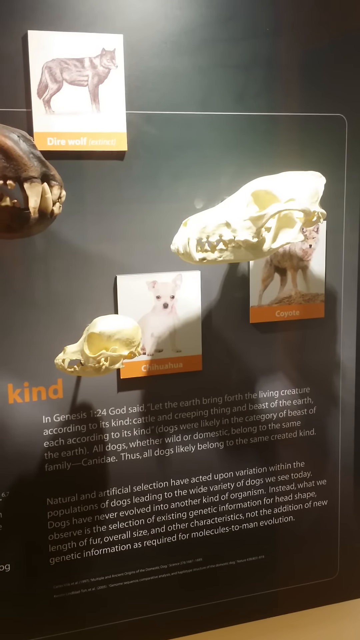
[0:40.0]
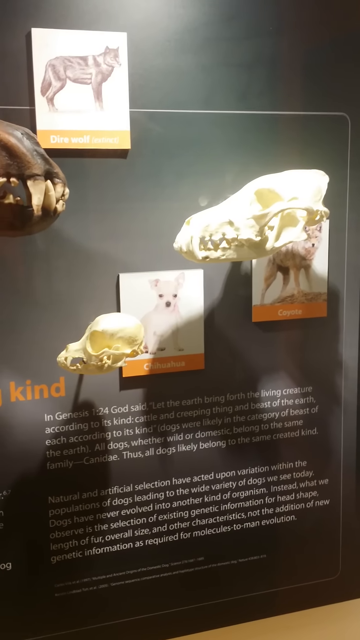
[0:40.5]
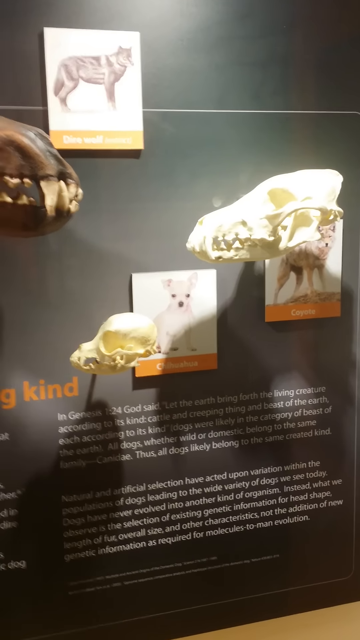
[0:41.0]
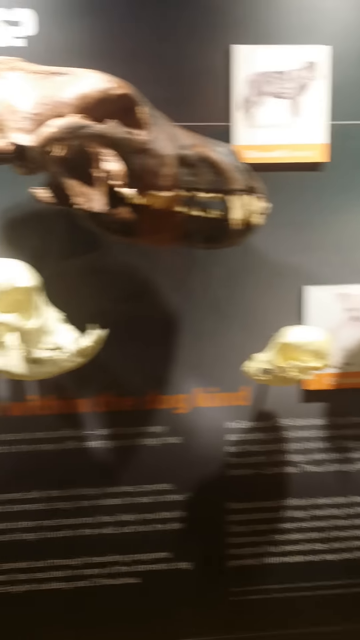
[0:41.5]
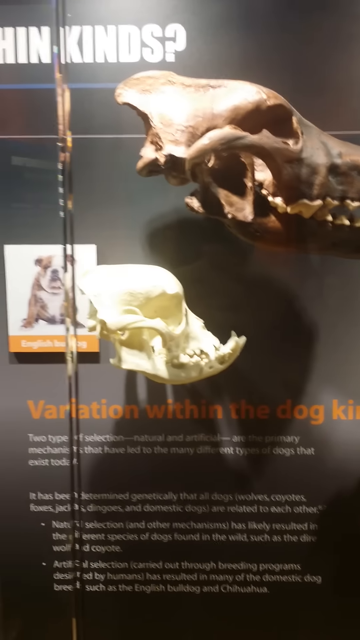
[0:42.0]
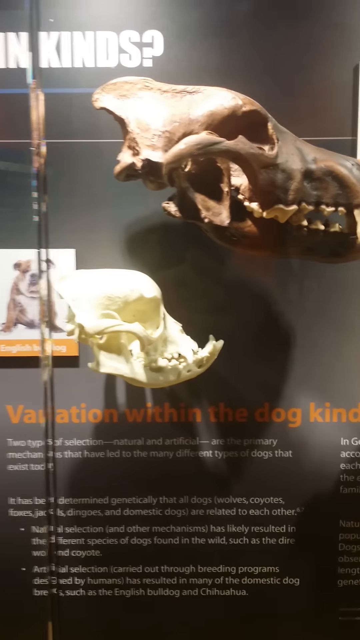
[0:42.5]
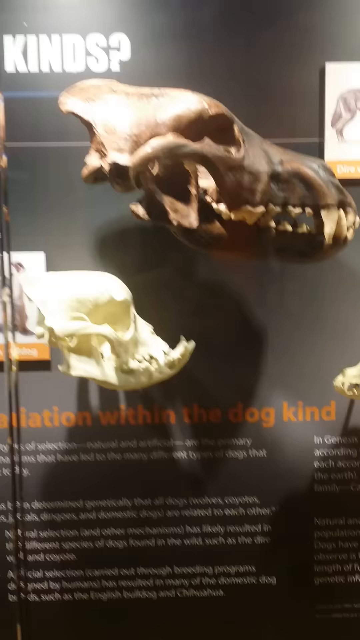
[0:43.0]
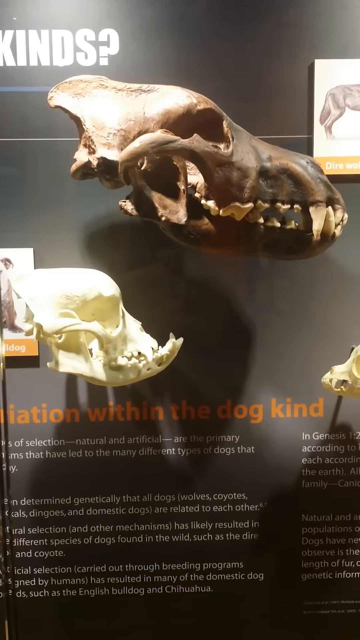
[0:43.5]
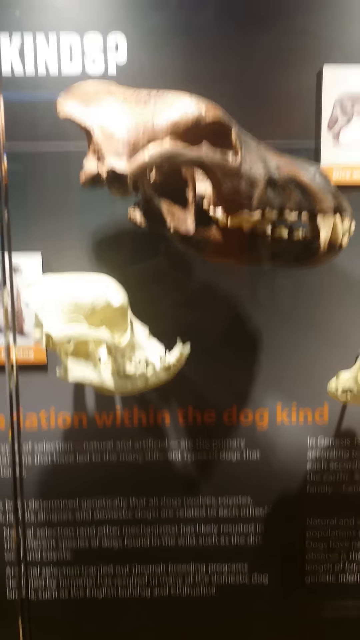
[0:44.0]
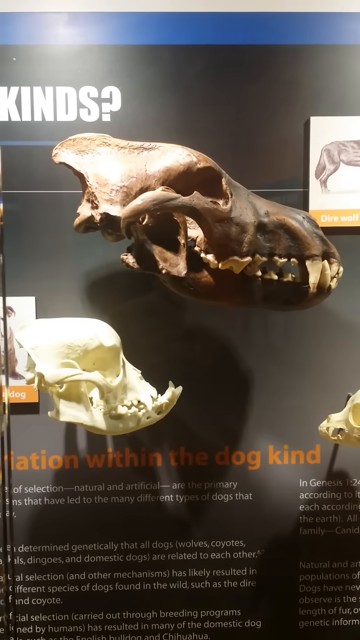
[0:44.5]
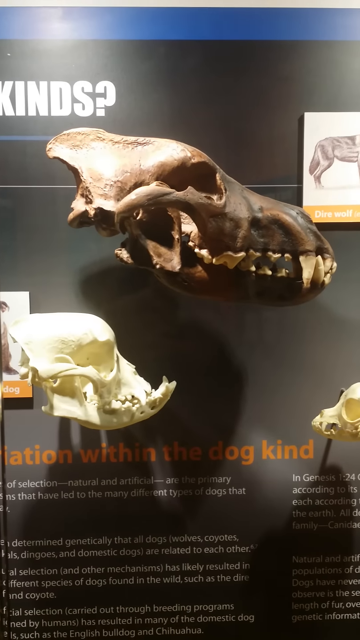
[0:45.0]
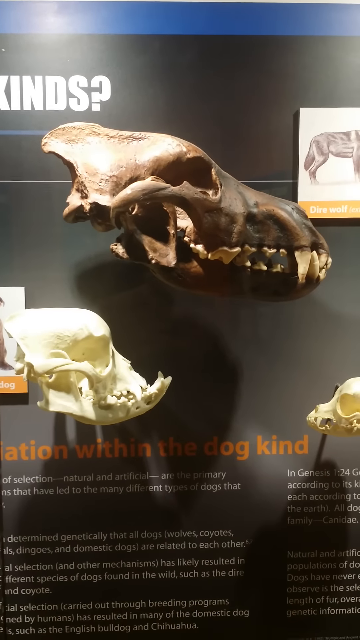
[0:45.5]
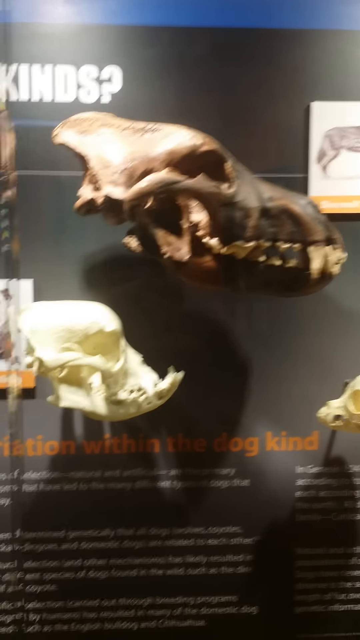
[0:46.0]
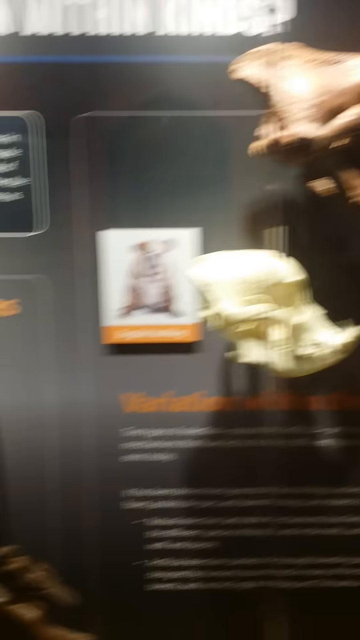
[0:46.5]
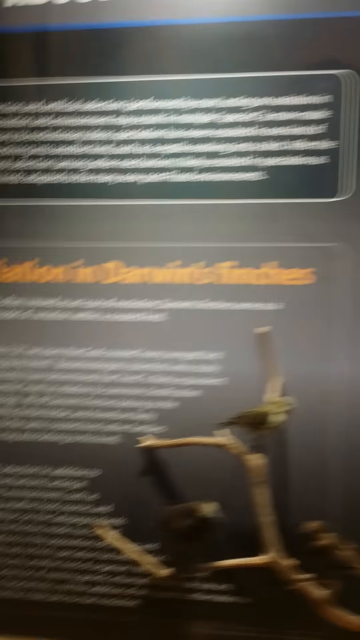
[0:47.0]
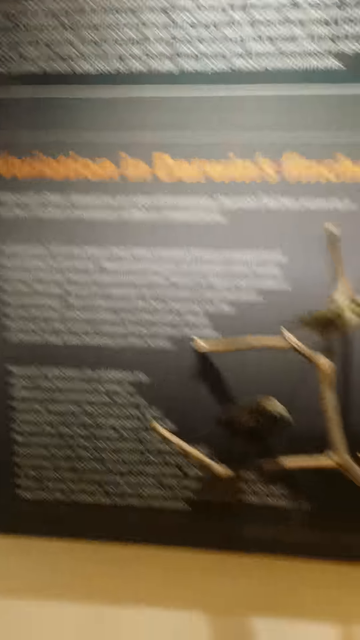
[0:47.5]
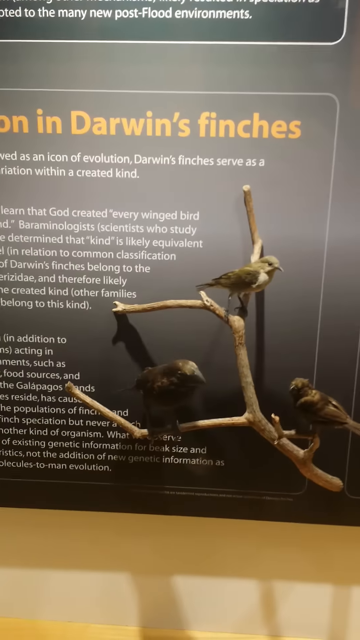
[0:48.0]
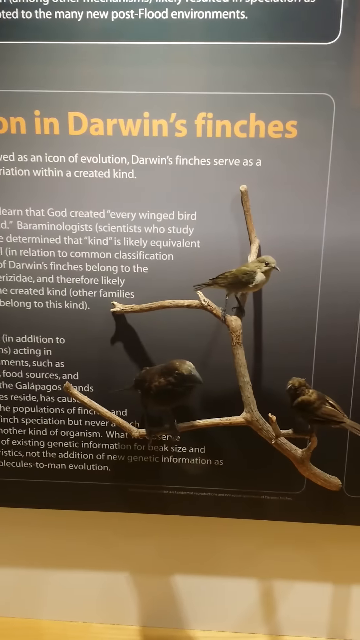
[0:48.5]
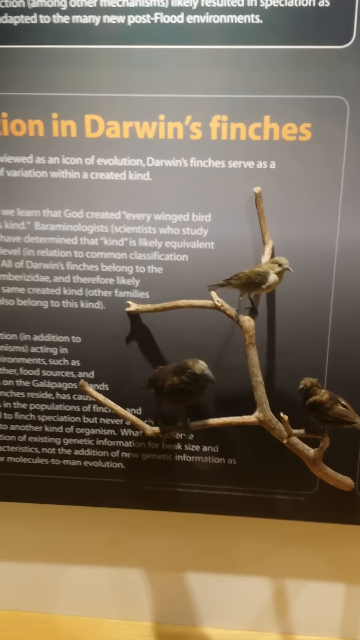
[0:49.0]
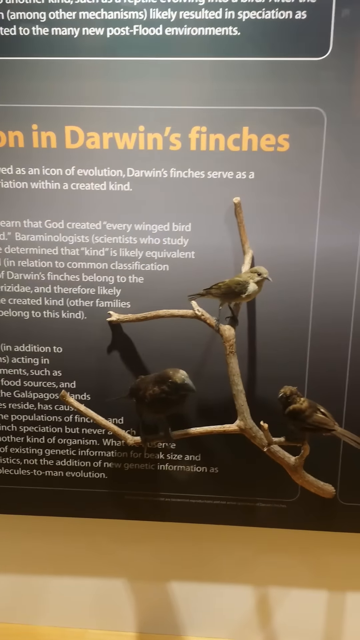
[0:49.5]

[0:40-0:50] The camera points again at the dogs and their different skulls: a Chihuahua, what look like huskies or nearly wolf-type dogs, and one bigger dog, maybe a larger wolf. The Chihuahua skull is much smaller, and text explains the variation within the dog kind as caused by humans, not natural selection. The camera then pans back to the three Darwin's finches on the left side of the wall, where text explains what Darwin's finches were and why they are relevant to variation and Darwin's theory of natural selection. Some unclear, blurred text is also visible as the camera moves.